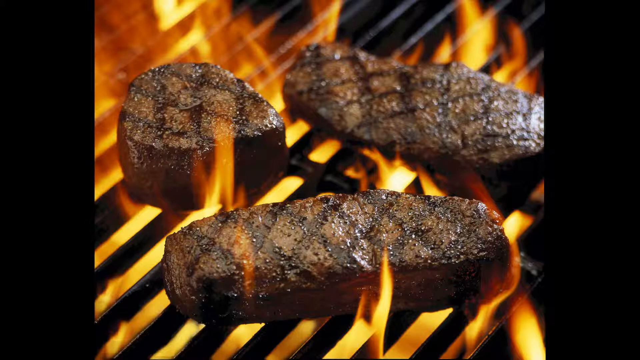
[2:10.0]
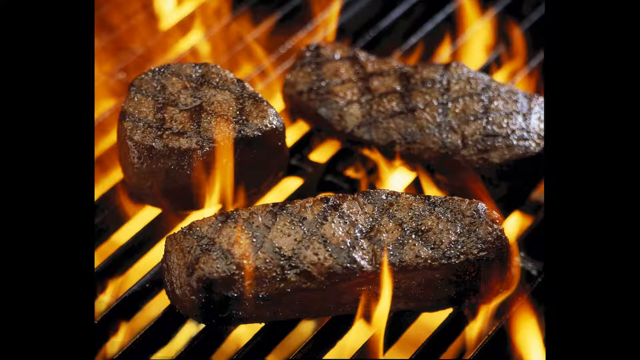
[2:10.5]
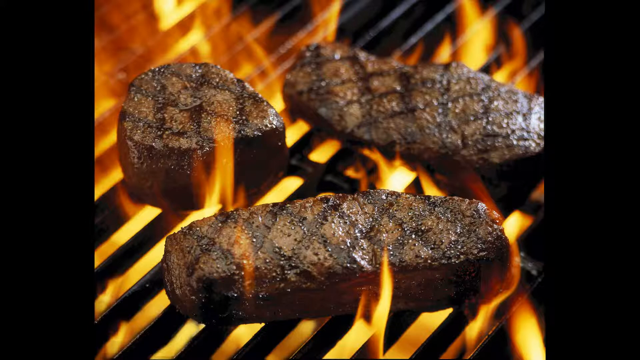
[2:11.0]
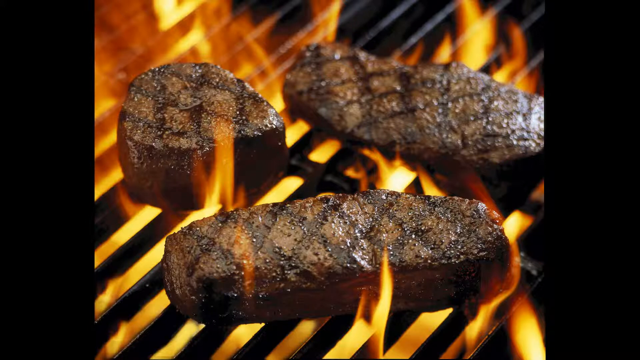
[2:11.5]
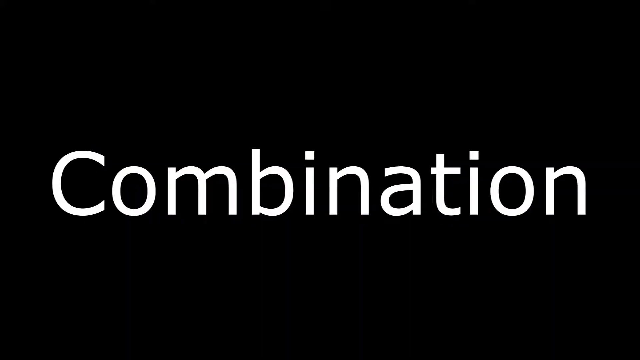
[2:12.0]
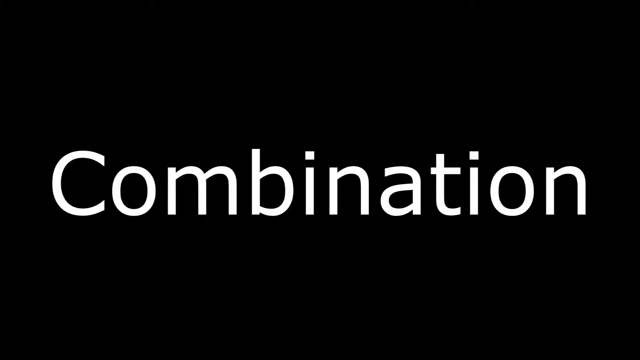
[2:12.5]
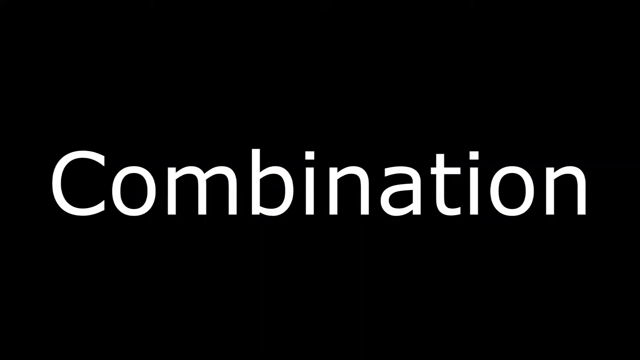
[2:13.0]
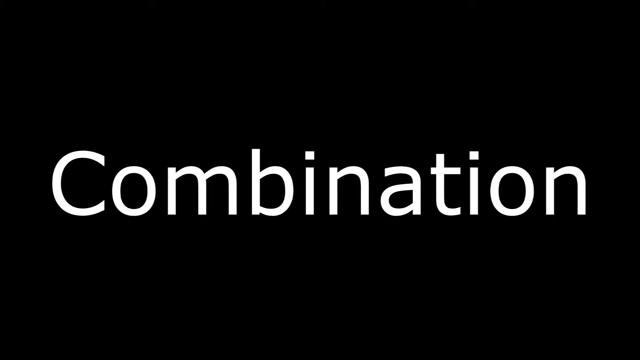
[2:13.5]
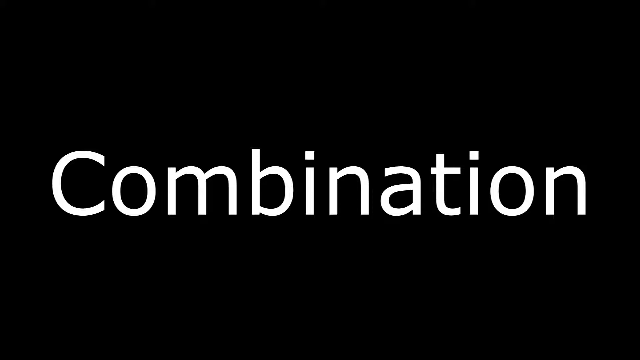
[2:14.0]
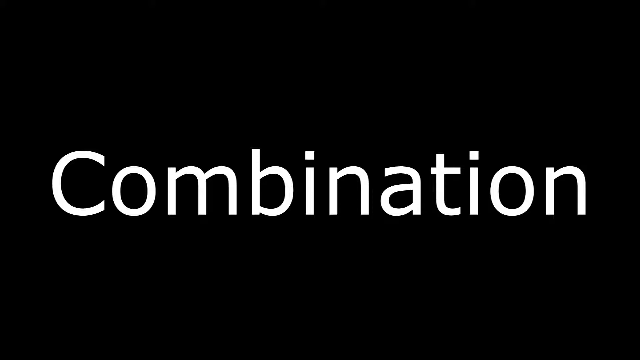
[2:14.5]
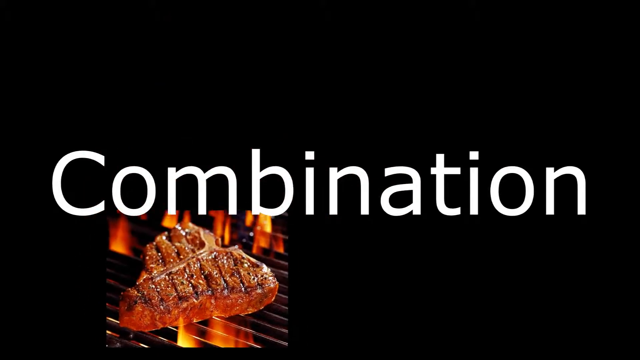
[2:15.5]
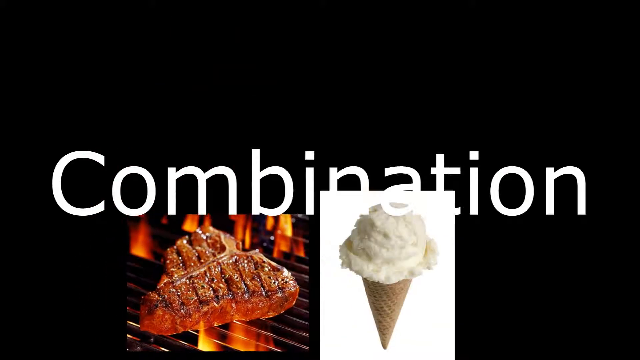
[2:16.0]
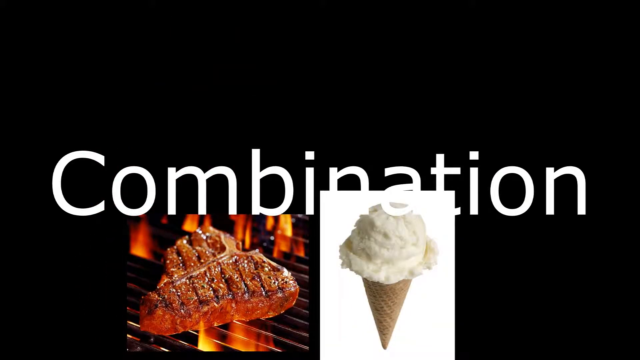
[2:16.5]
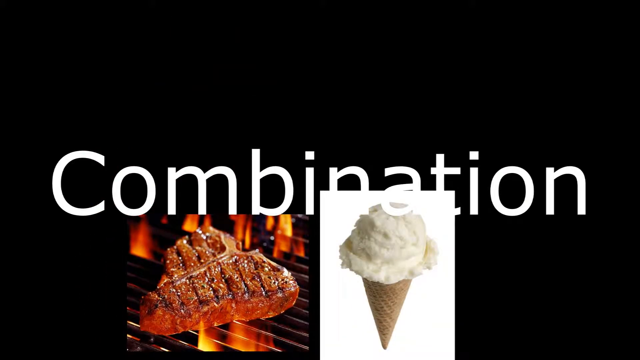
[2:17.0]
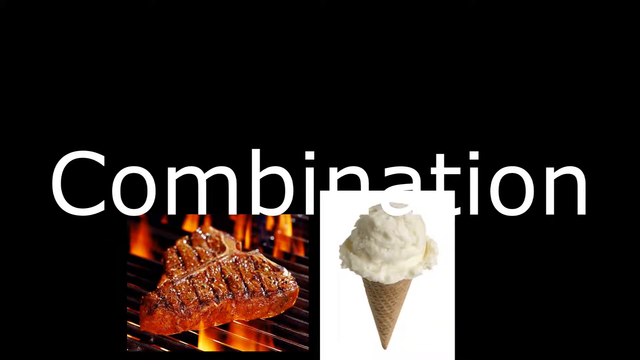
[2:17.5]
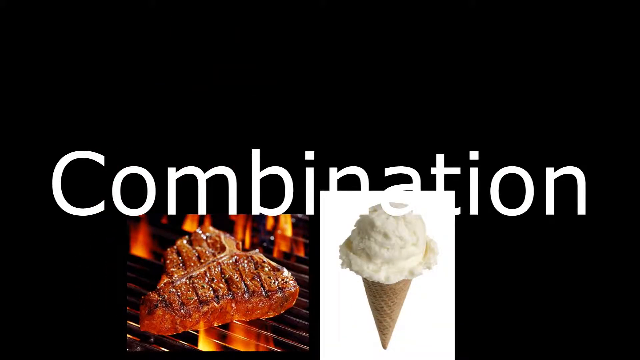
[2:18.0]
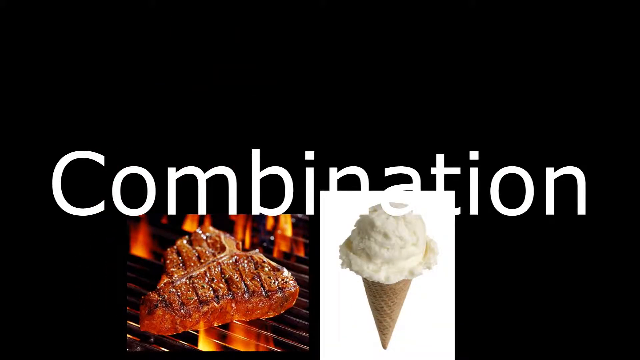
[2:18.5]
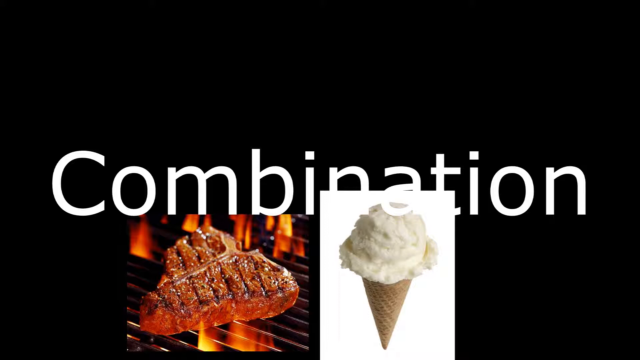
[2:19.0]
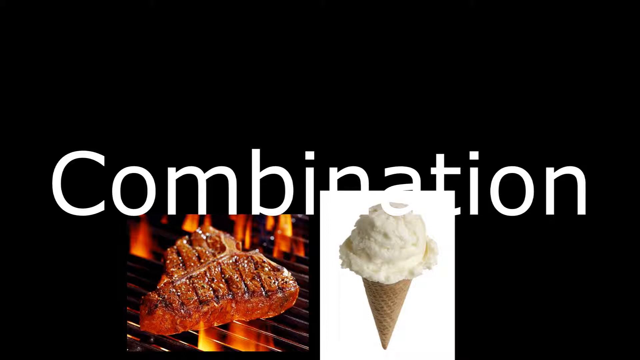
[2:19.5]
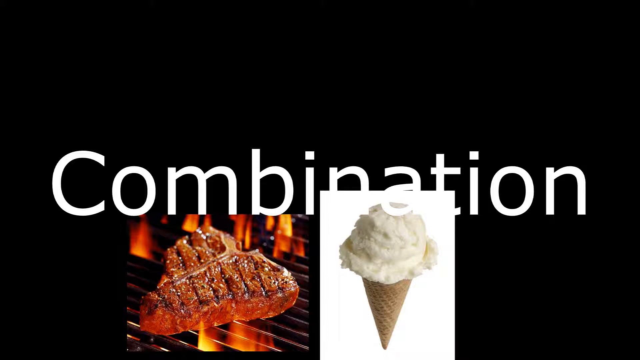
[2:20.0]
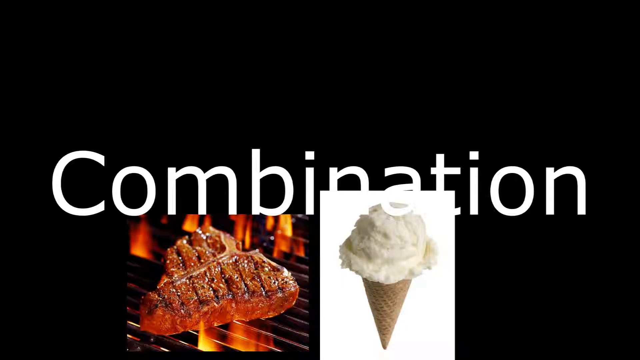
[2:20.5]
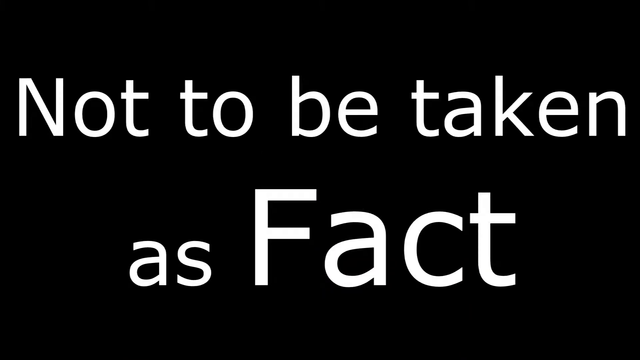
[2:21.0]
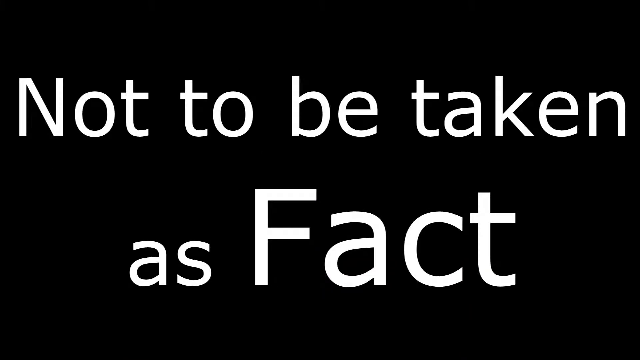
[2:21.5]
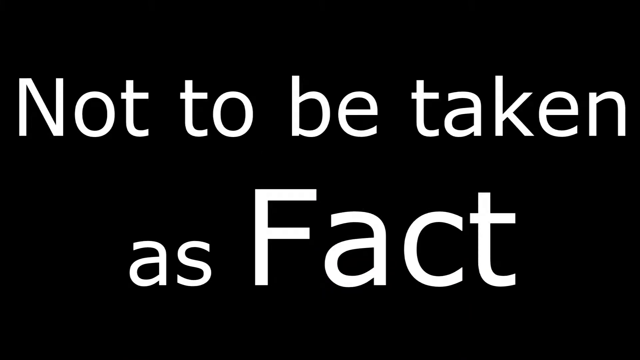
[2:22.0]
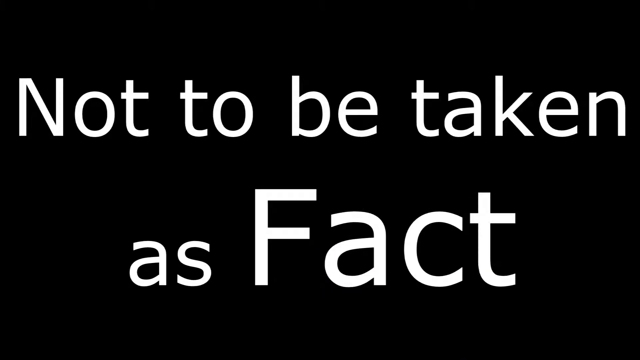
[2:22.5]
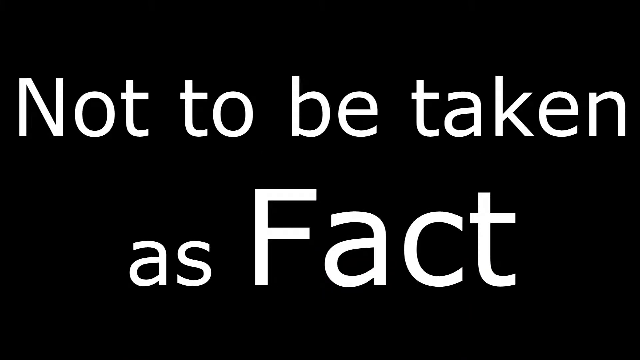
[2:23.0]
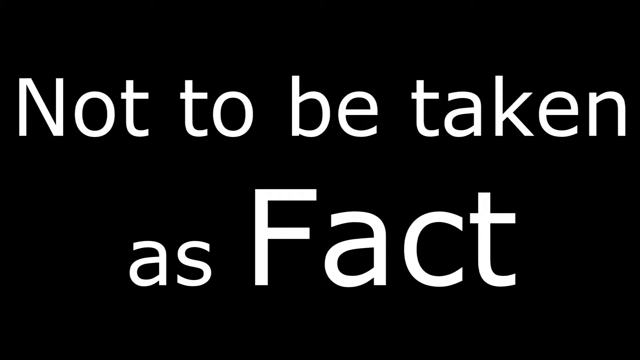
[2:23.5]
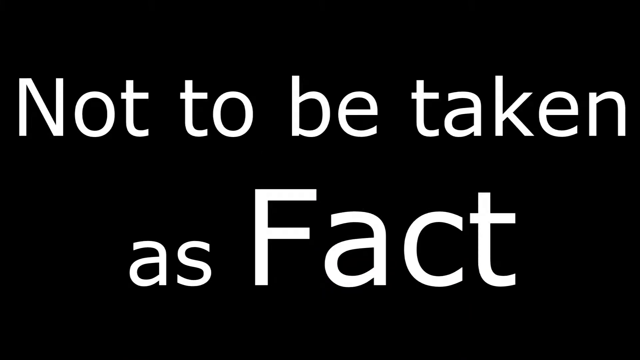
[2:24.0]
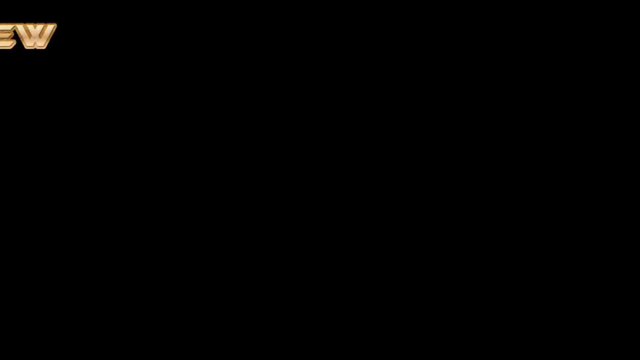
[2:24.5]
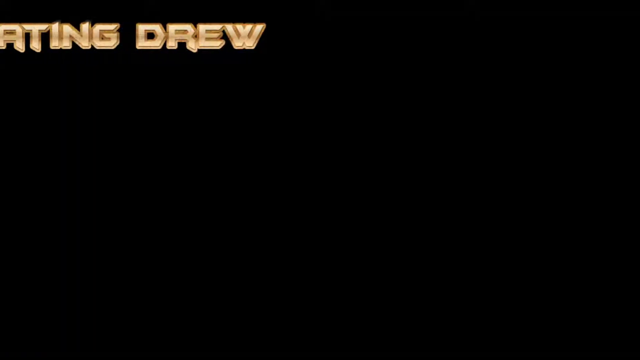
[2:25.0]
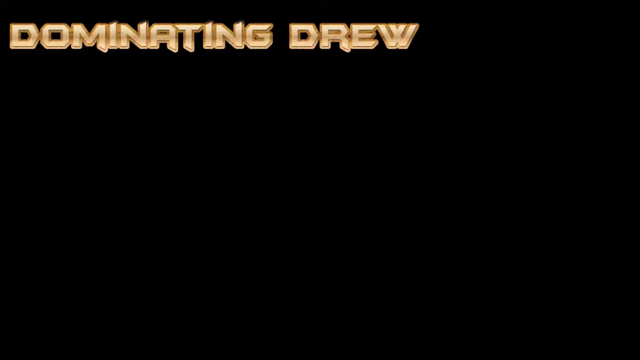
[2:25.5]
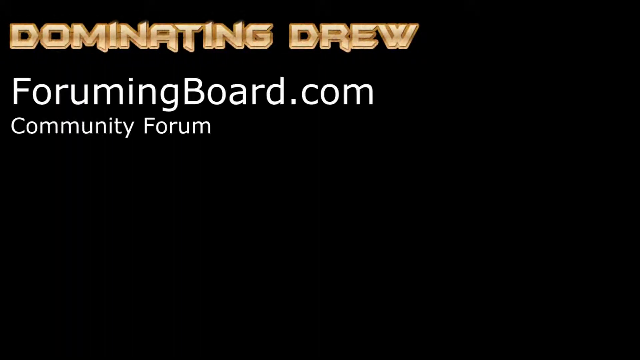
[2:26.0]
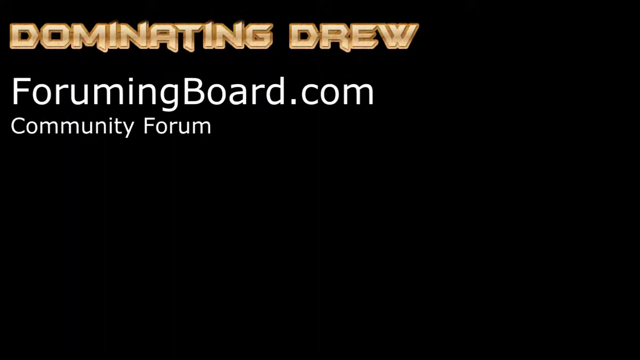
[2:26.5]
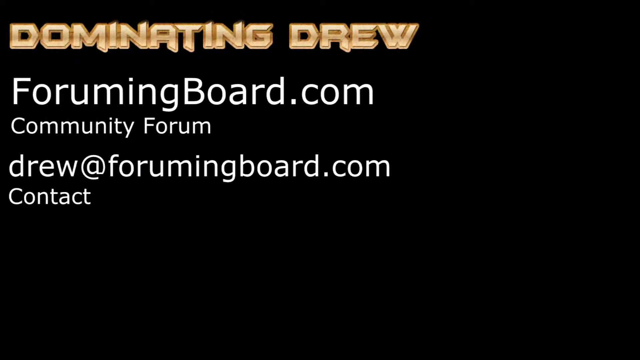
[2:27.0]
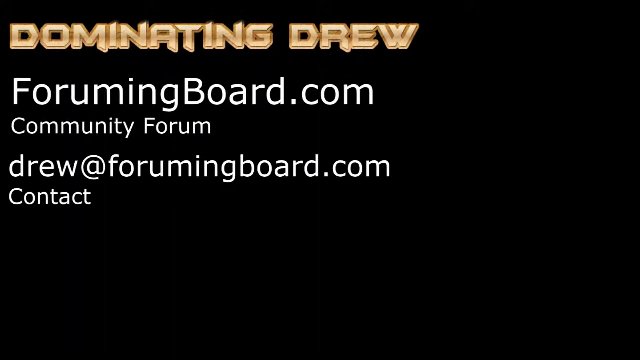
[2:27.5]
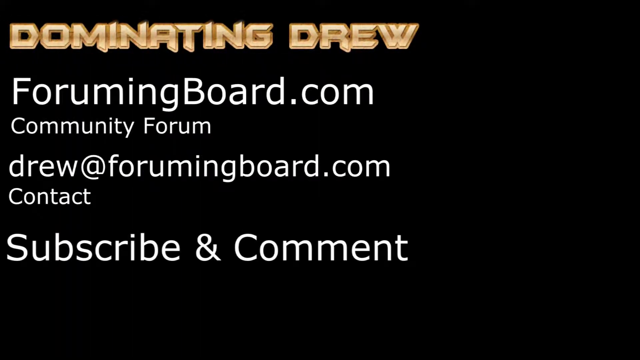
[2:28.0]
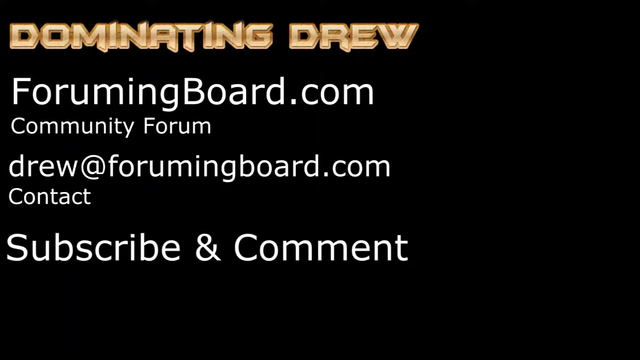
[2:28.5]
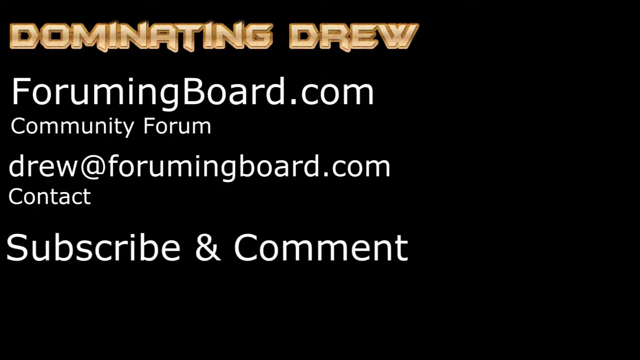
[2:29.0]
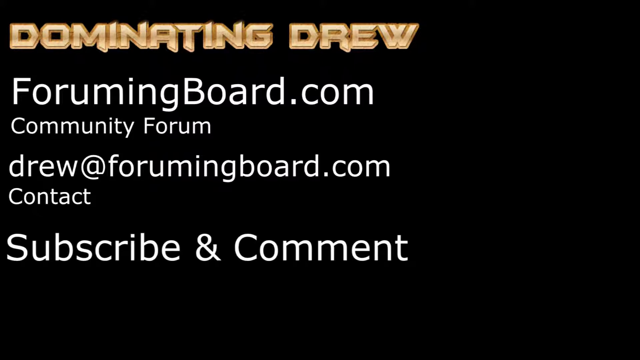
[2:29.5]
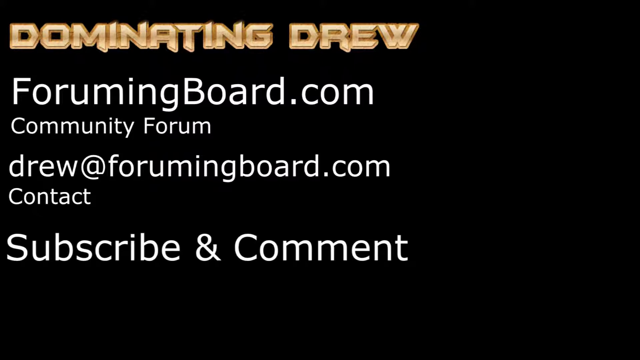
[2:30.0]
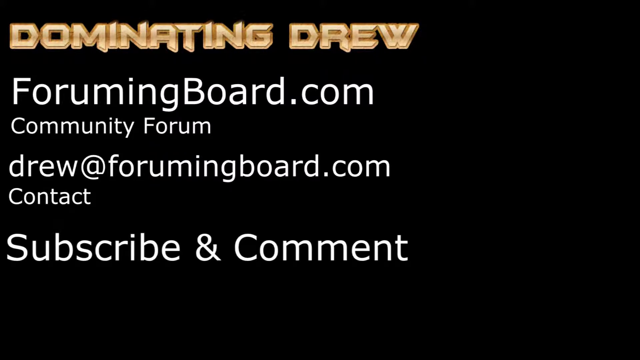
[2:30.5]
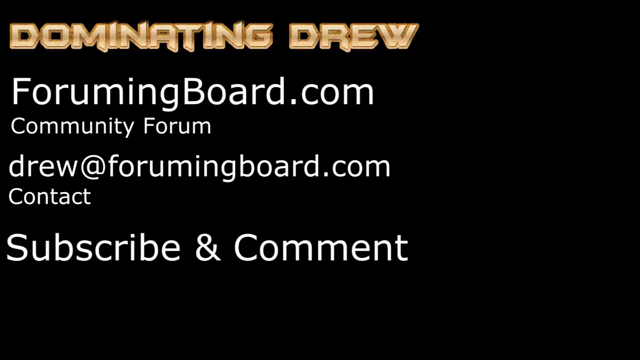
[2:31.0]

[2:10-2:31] The sirloins and the filet mignon are being grilled over an open flame, with grill marks on them. The word "combination" appears in white letters on a black background, with a picture of a flame-broiled steak next to an ice cream cone. Text says "not to be taken as fact", with "fact" in giant letters. The closing screen shows the channel name Dominating Drew, along with "forumingboard.com", "community forum", "drew@forumingboard.com", "contact", "subscribe" and "comment".